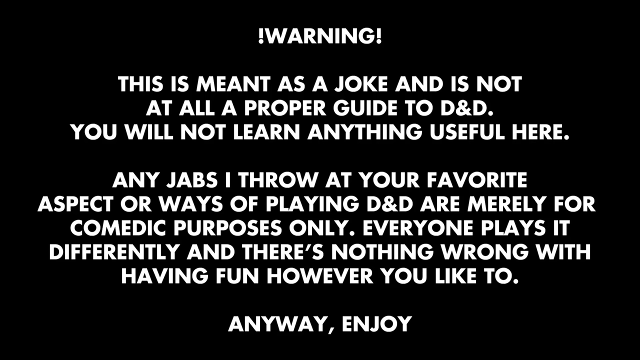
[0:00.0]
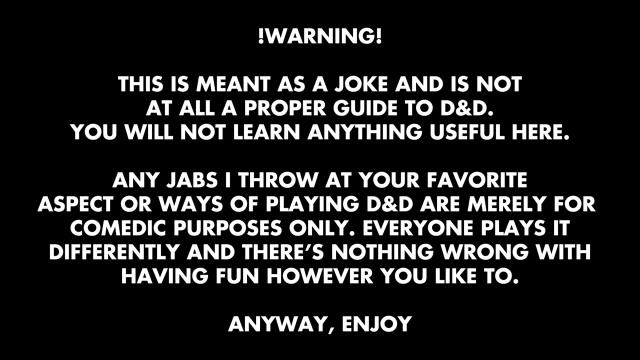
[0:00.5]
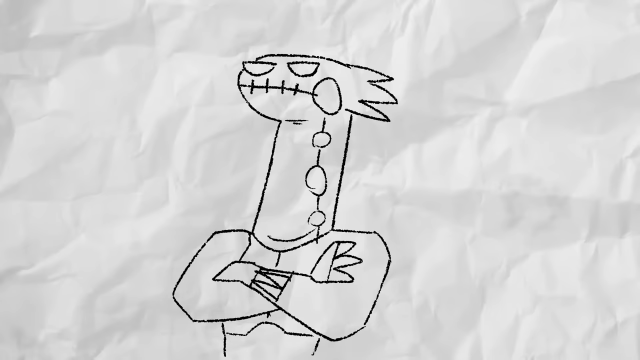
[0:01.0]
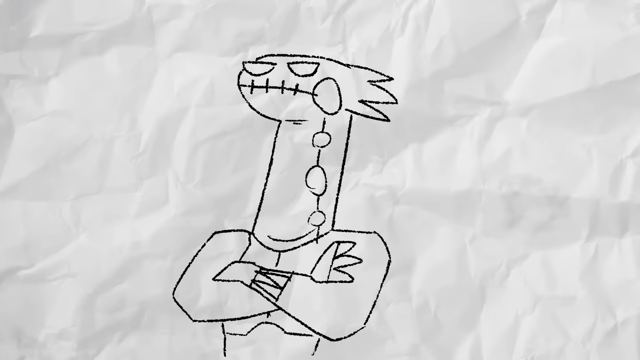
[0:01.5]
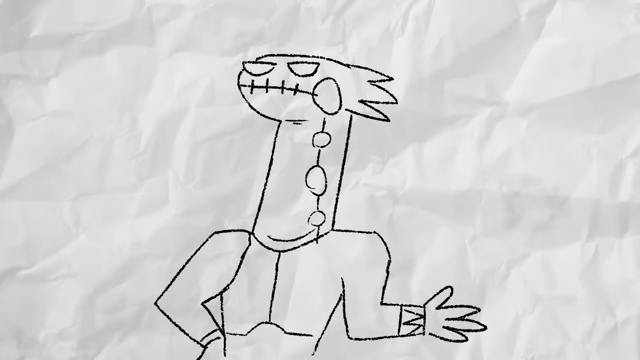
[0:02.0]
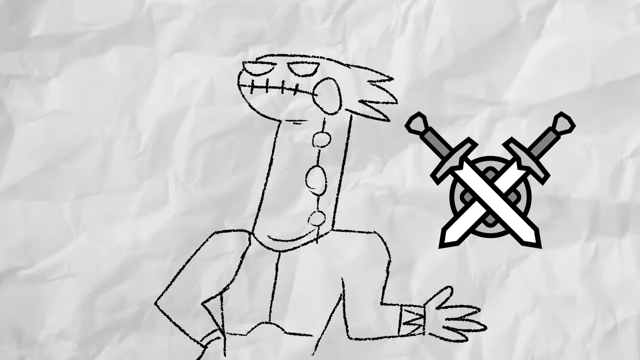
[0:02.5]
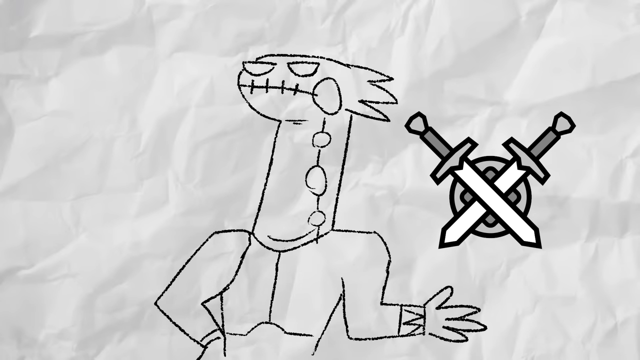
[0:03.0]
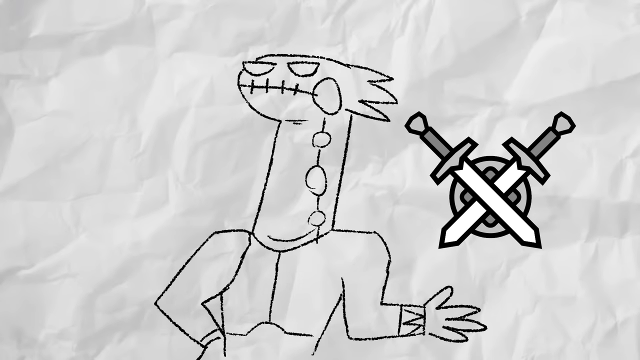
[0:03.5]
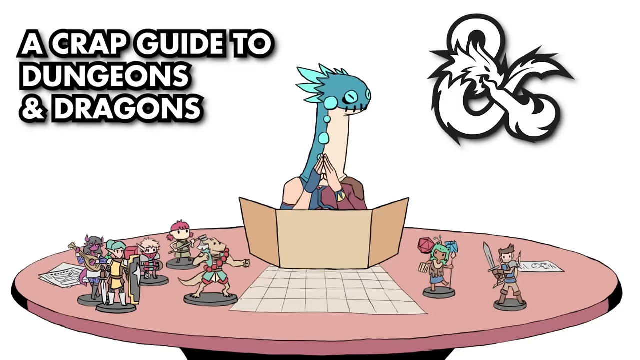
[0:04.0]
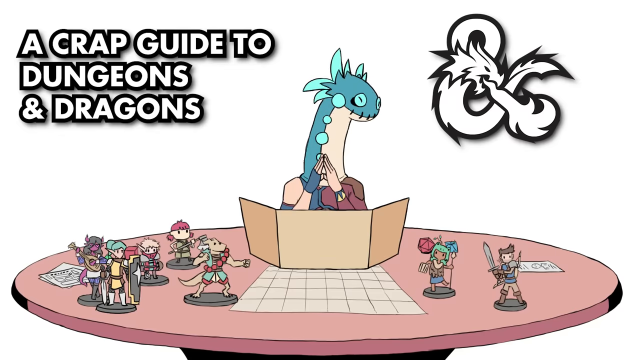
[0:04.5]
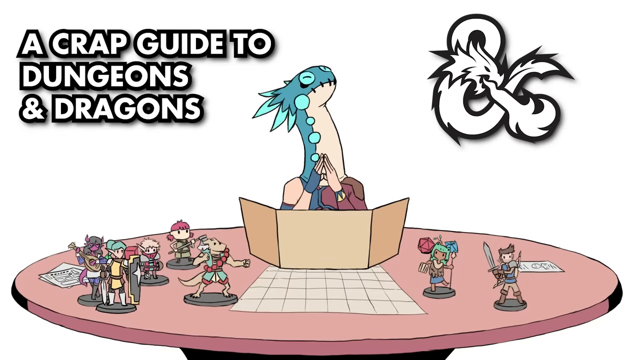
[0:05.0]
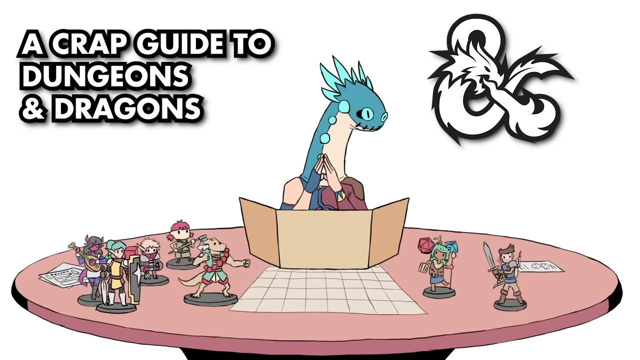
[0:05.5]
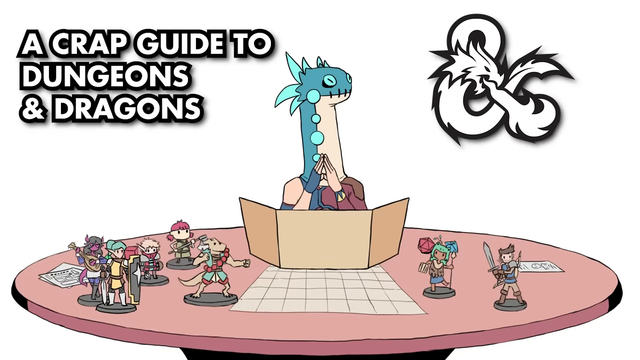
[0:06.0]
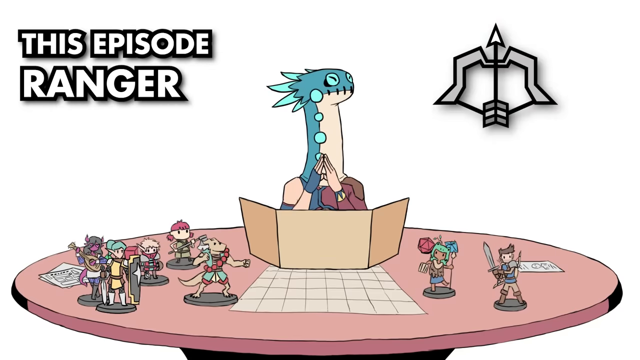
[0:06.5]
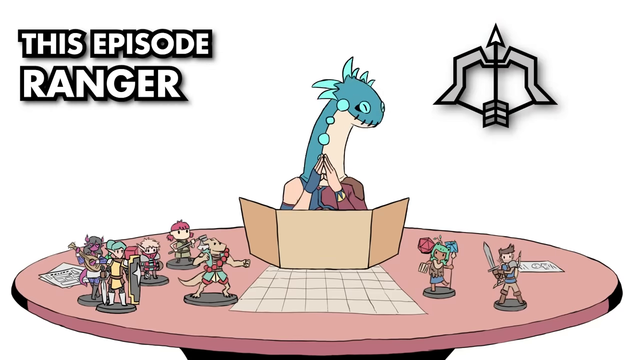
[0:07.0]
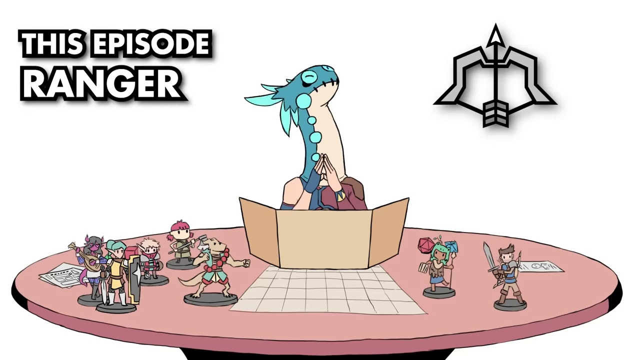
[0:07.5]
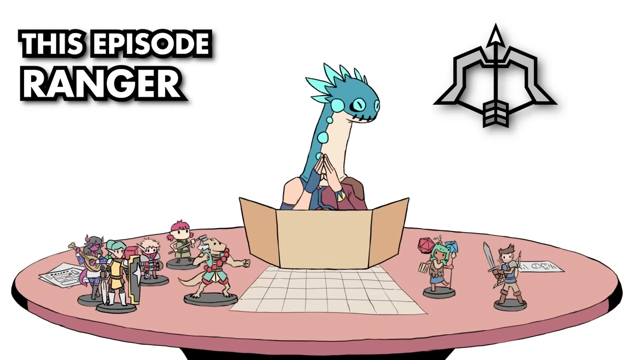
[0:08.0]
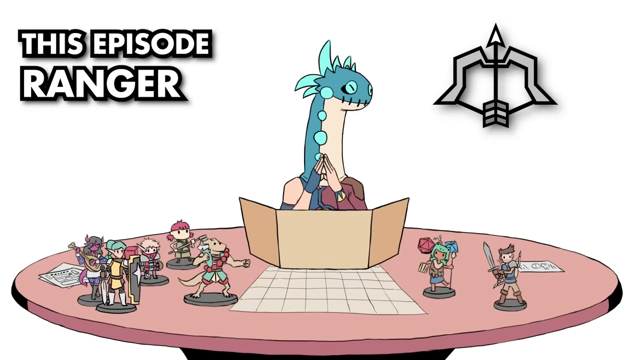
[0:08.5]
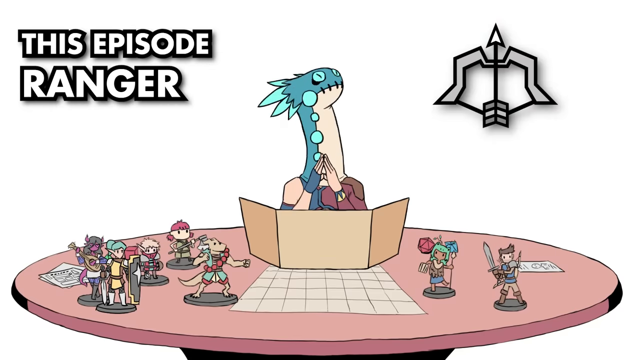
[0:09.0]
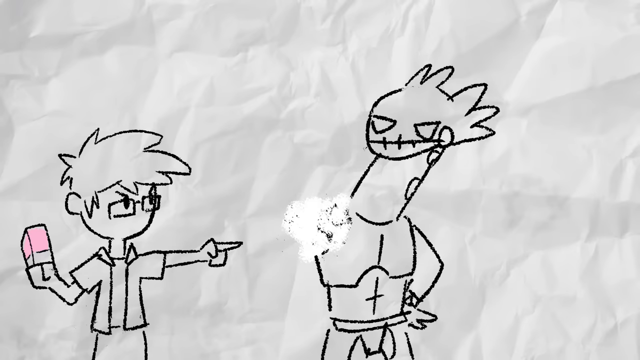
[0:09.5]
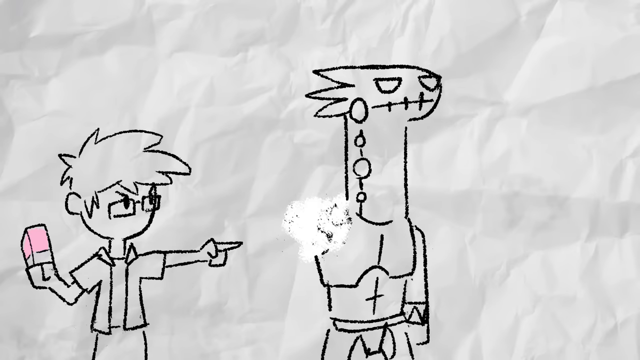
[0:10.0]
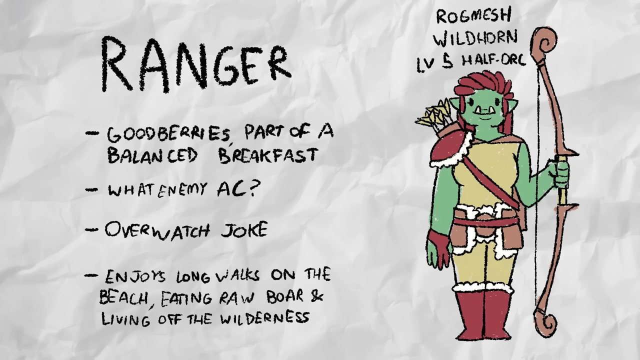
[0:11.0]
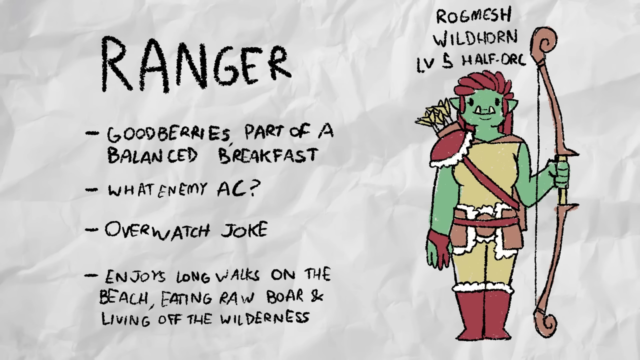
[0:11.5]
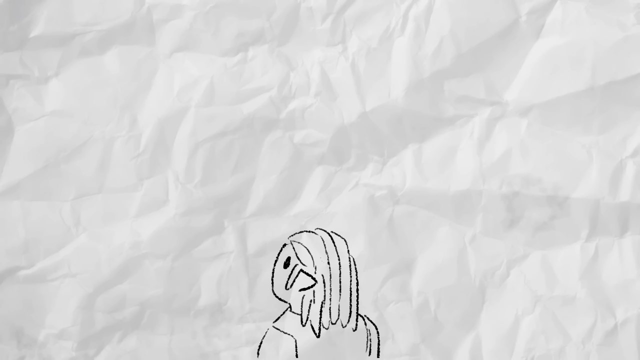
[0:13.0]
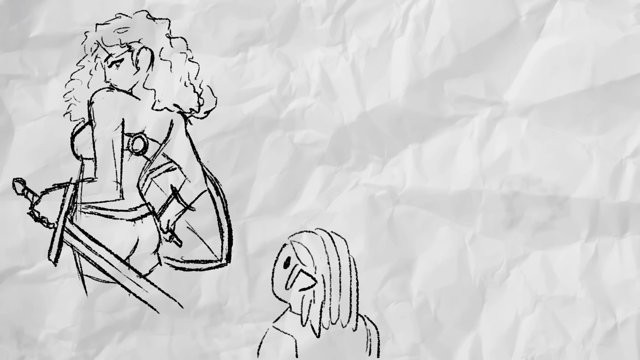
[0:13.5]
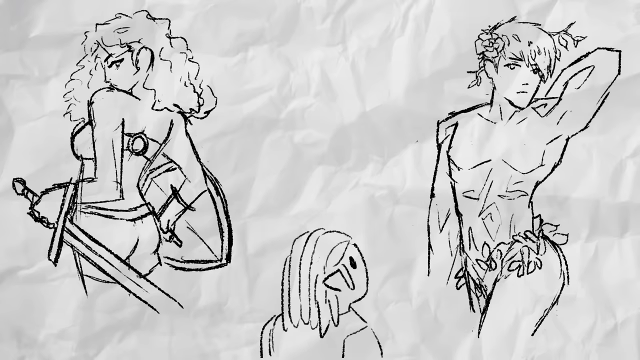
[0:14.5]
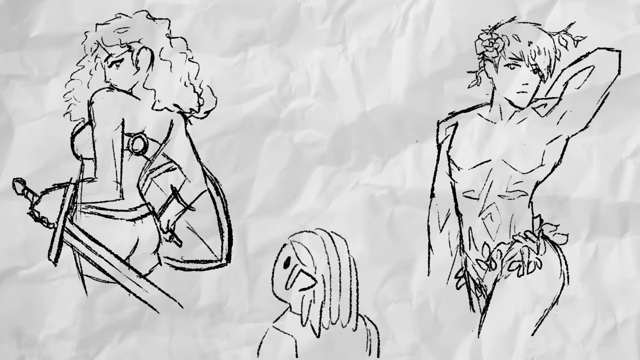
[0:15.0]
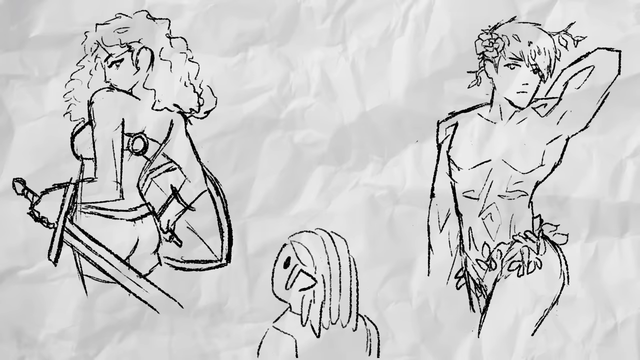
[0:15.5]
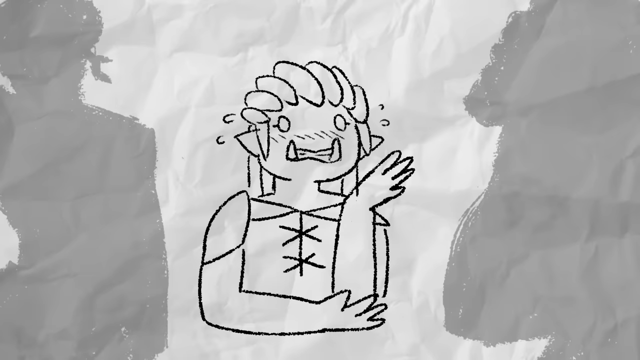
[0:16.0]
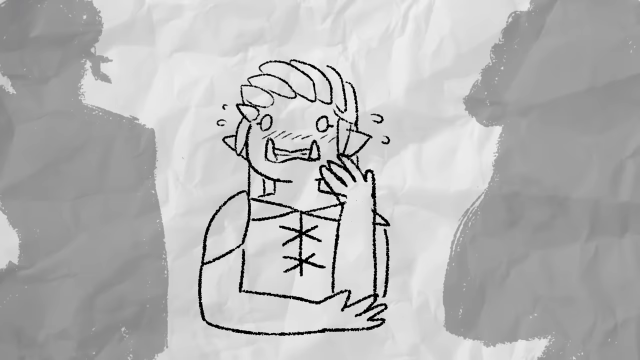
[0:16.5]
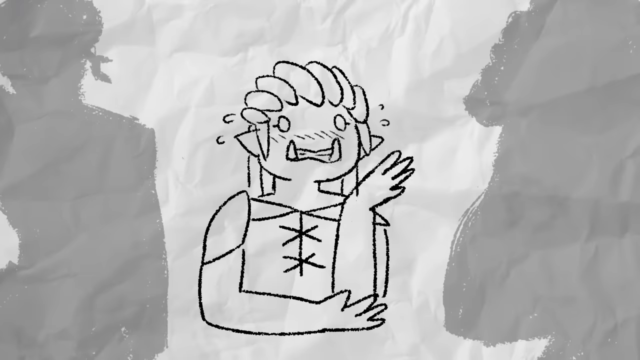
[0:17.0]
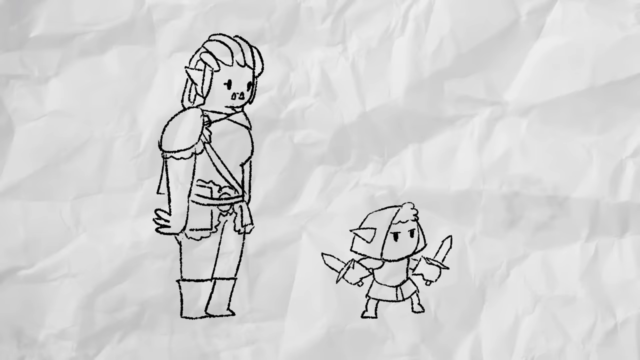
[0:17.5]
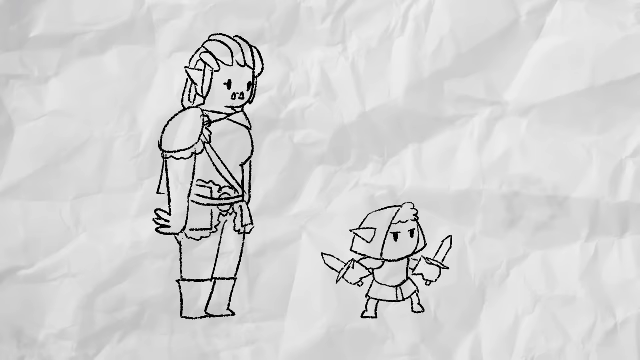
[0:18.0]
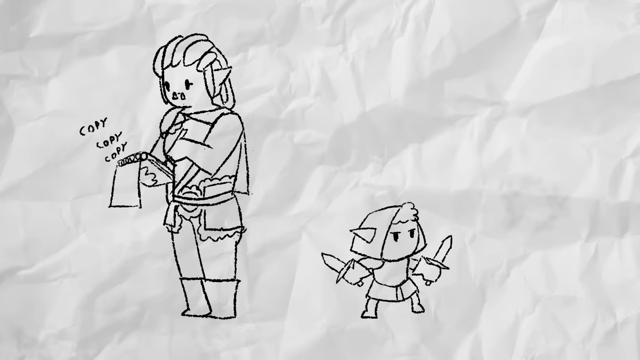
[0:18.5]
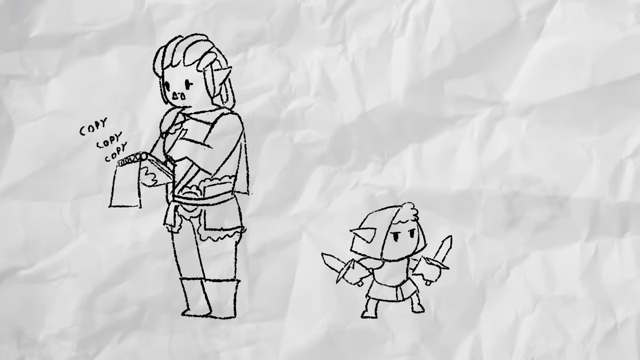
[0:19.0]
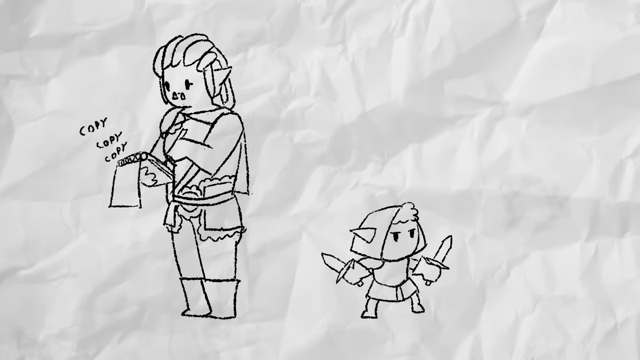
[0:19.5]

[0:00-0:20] The video opens with a message in white text on a pitch black background: "Warning this is meant as a joke and it's not at all a proper guide to D&D You will not learn anything useful here Any jabs I throw at your favorite aspect or ways of playing D&D are merely for comedic purposes only Everyone plays it differently and there's nothing wrong with having fun. However, you like to Anyway, enjoy." It quickly cuts to a crumpled white paper with animation placed on top of it: a drawing, in black colored pencil, of what looks to be some type of lizard monster person. On the right side are two swords crossing each other, which look like a logo. It then cuts to colored animation, with "a crap guide with dungeons and dragons" written at the top left.